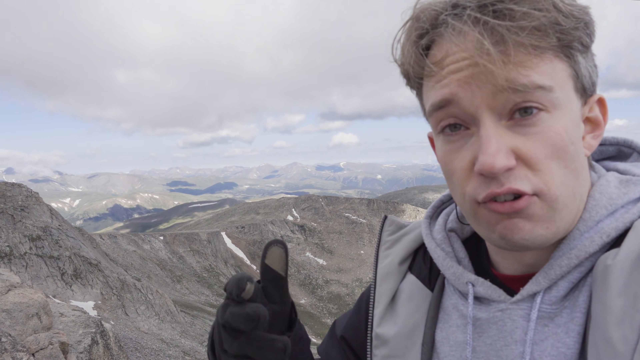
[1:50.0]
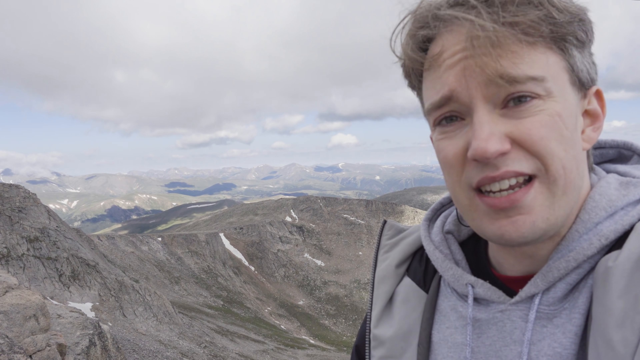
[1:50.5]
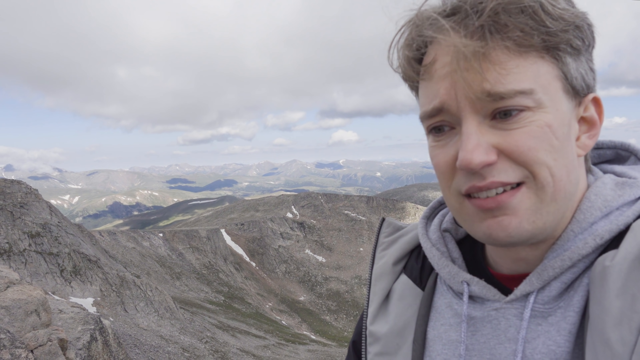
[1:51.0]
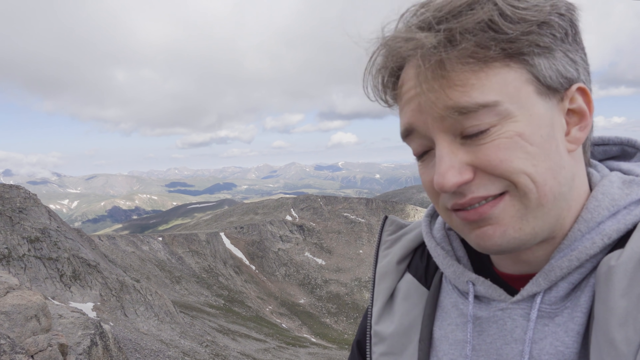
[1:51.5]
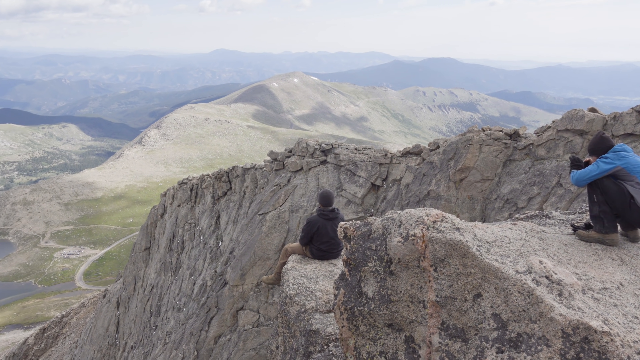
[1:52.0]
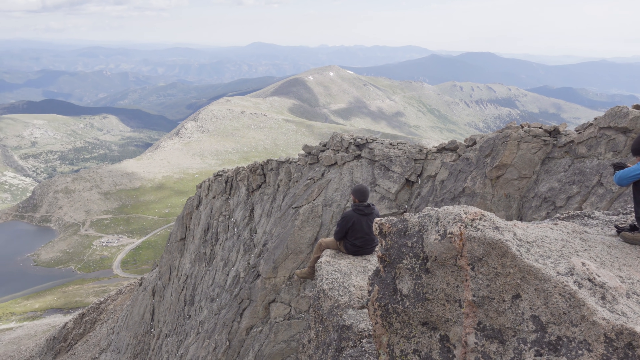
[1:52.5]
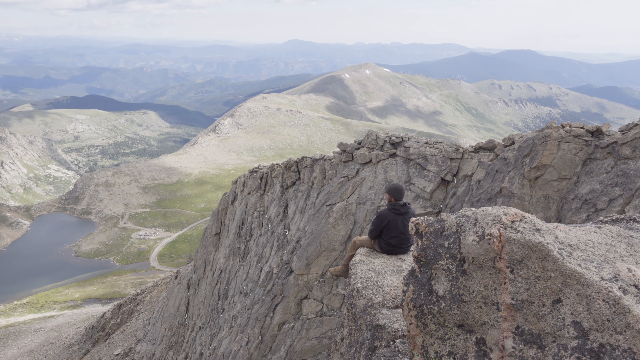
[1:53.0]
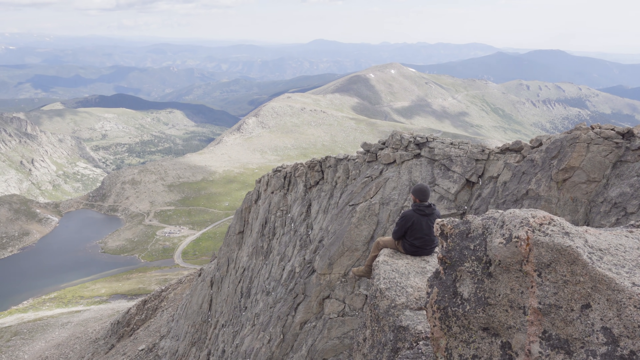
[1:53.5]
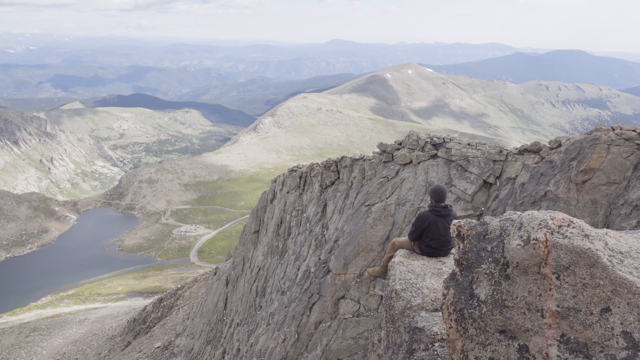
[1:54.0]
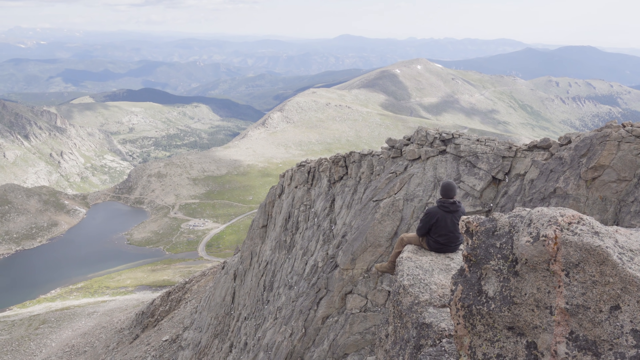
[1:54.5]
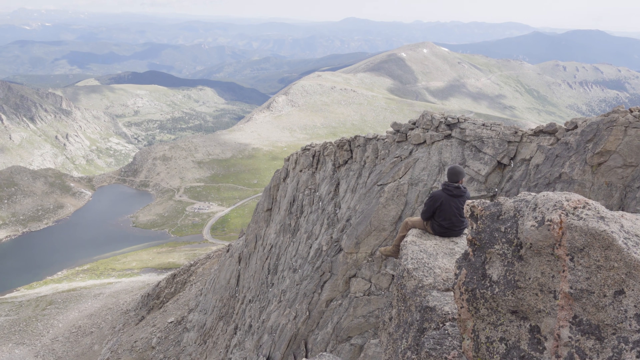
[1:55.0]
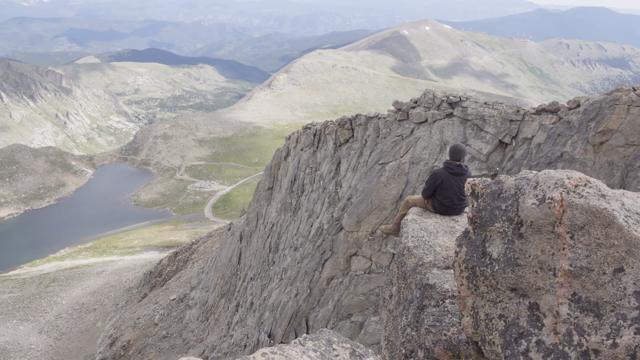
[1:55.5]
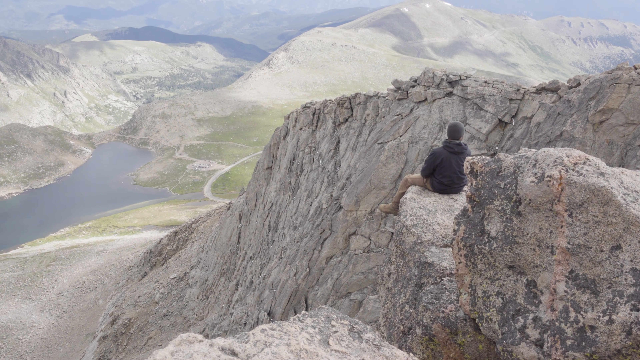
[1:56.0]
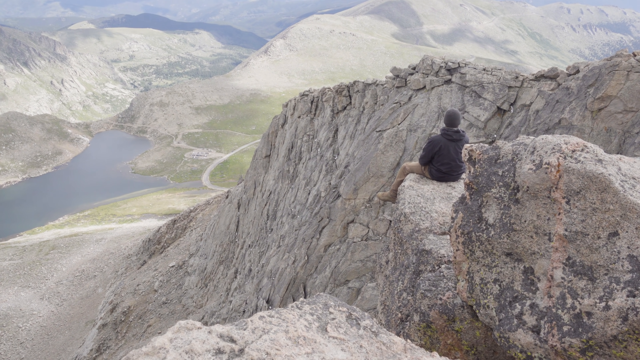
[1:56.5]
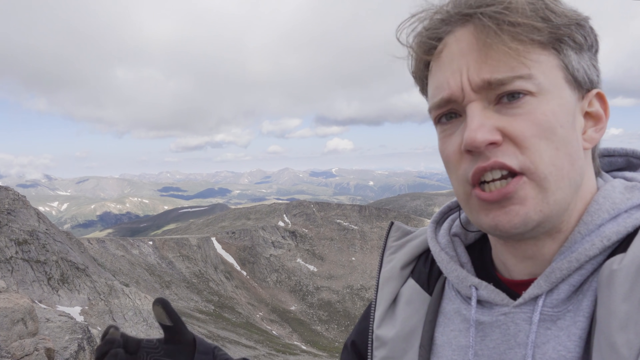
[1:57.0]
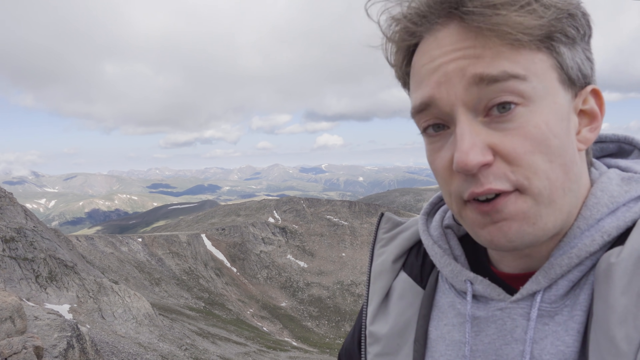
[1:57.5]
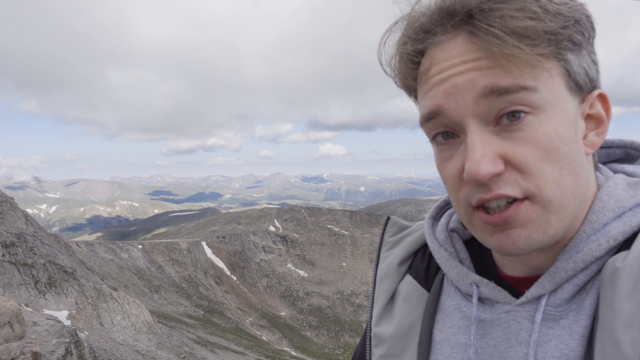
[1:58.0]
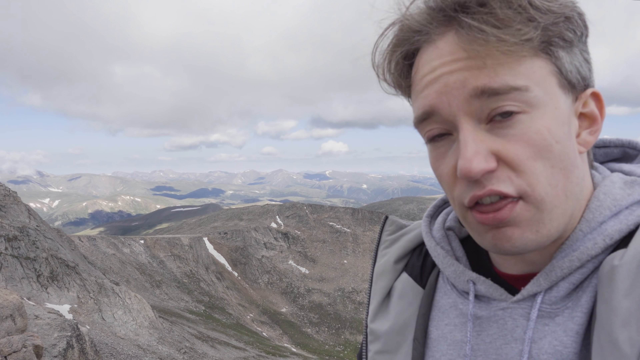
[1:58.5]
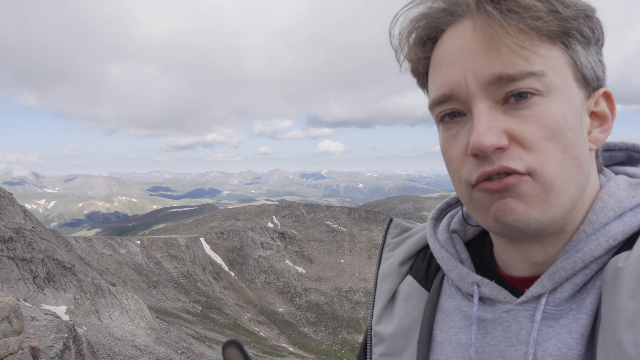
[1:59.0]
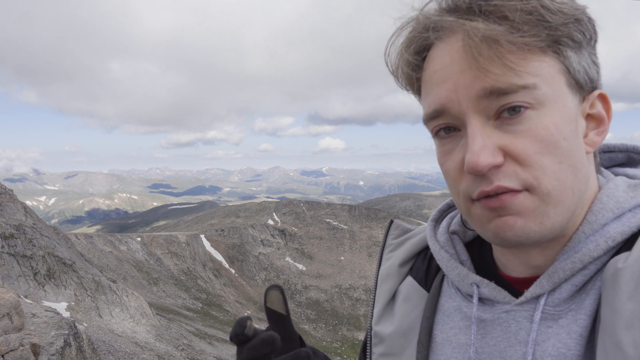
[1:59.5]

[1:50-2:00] The man is still speaking to the camera. The shot then cuts to a slow pan of two individuals sitting on the mountain. One sits in a safe spot on top of one of the rocks. The other sits in a slightly dangerous spot, his legs hanging off the rock with nothing below him. The man is wearing a black sweater and a beanie. The shot cuts to the man speaking to the camera, who makes a face that looks slightly worried. The man standing in the safe position wears a blue sweater, a dark beanie and what appear to be dark shoes, and holds a camera, apparently taking a photo of the person sitting with legs hanging off the cliff.